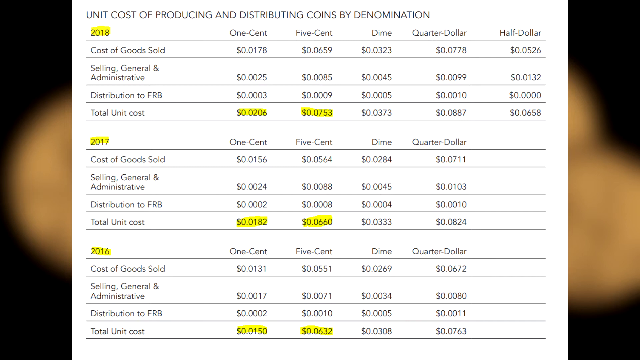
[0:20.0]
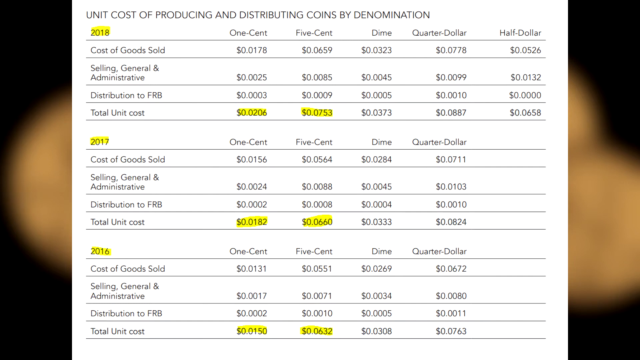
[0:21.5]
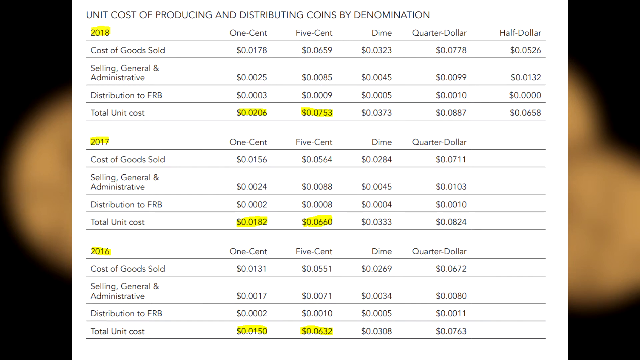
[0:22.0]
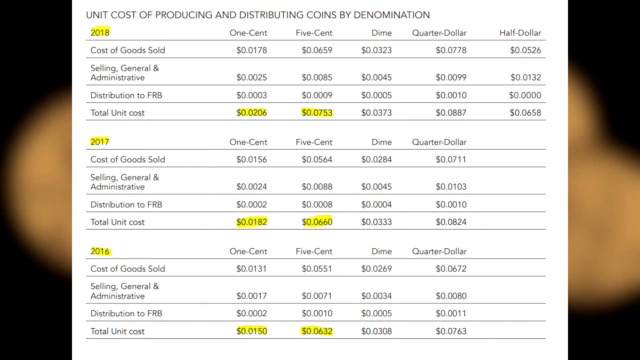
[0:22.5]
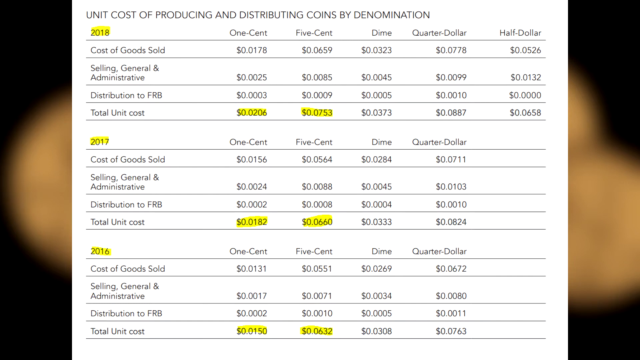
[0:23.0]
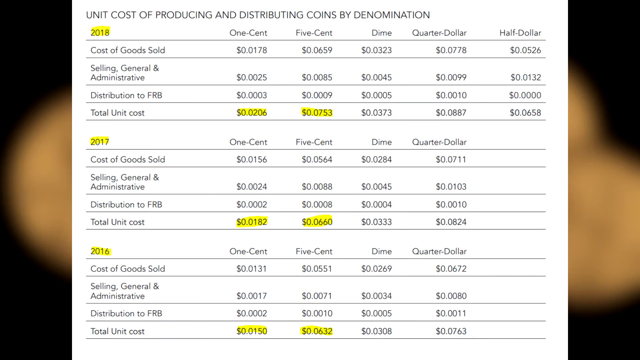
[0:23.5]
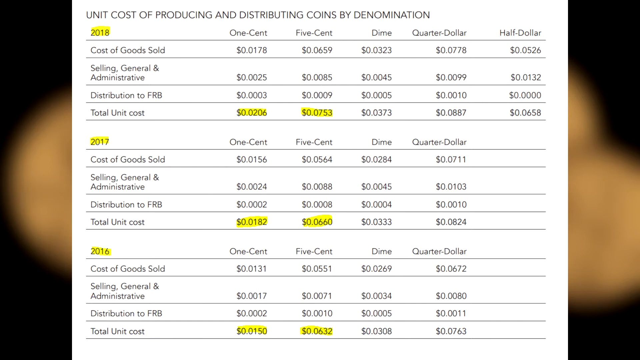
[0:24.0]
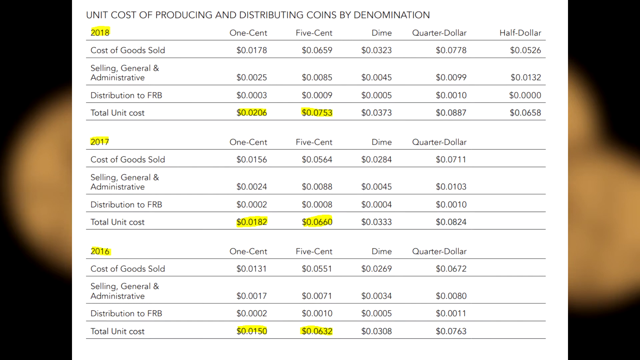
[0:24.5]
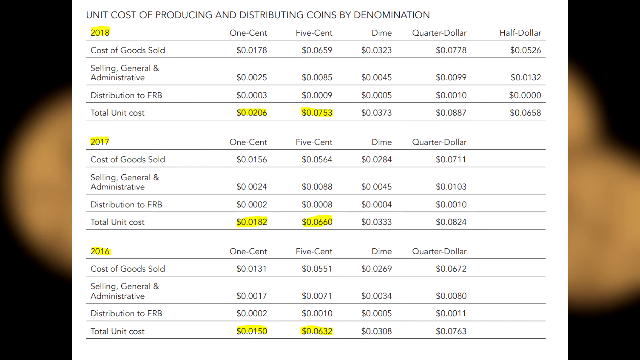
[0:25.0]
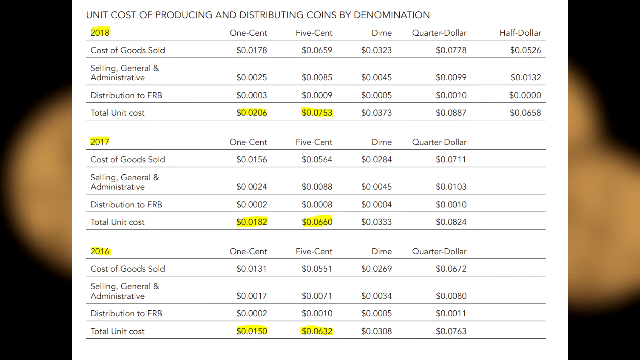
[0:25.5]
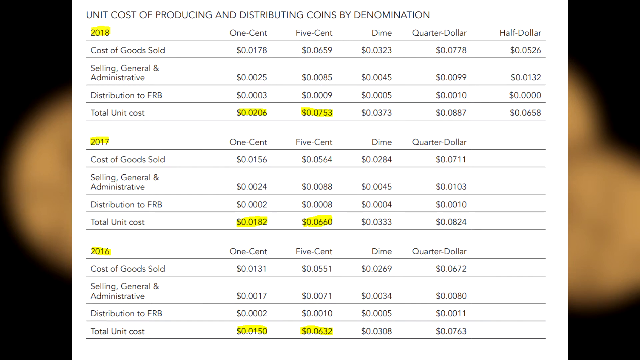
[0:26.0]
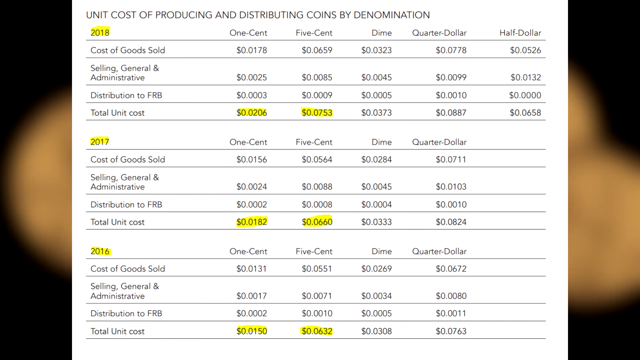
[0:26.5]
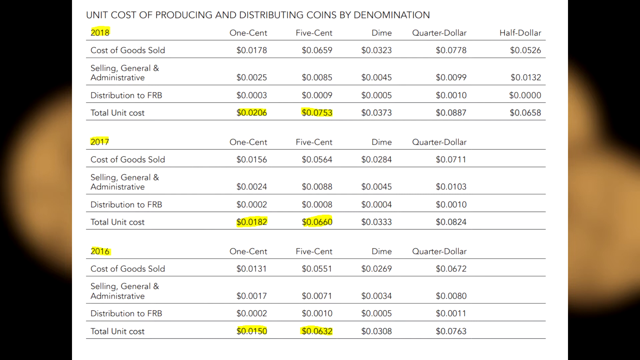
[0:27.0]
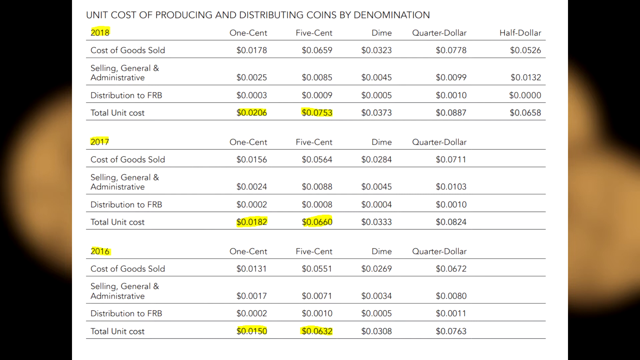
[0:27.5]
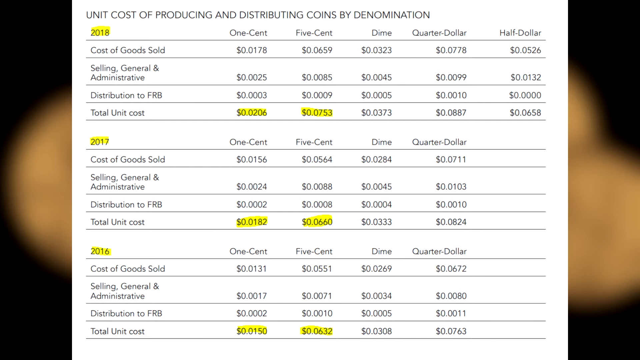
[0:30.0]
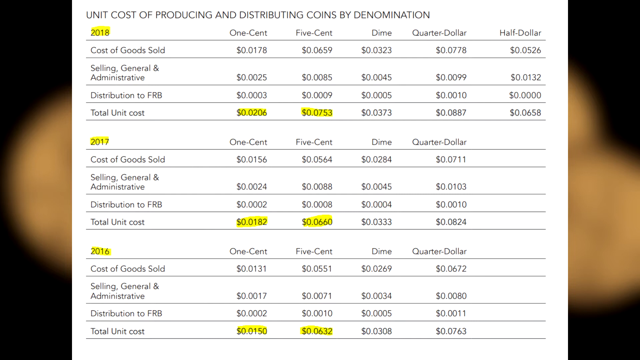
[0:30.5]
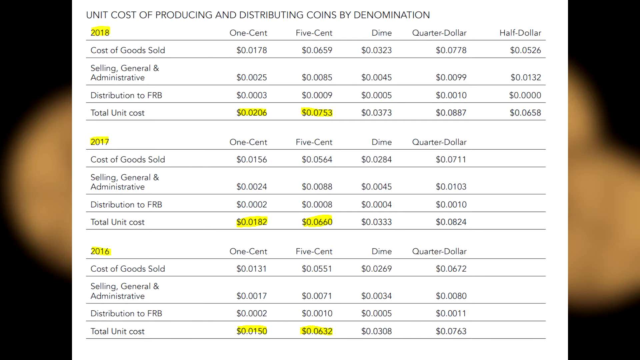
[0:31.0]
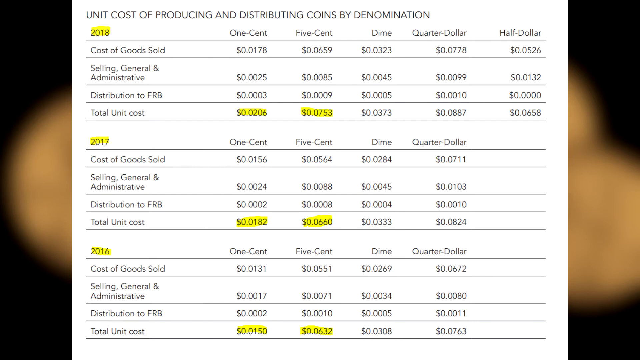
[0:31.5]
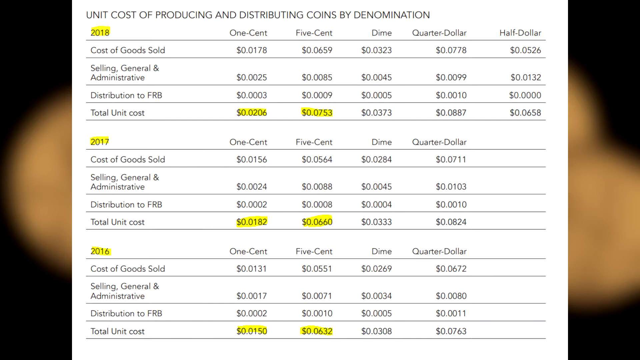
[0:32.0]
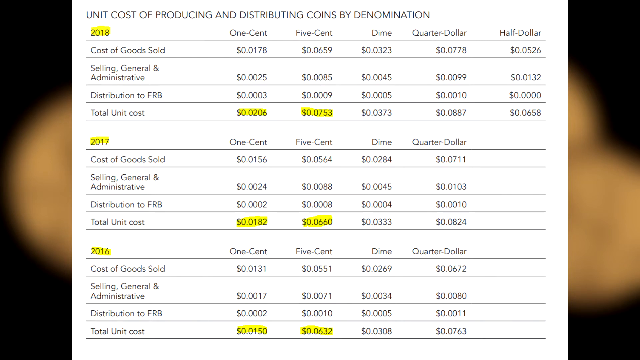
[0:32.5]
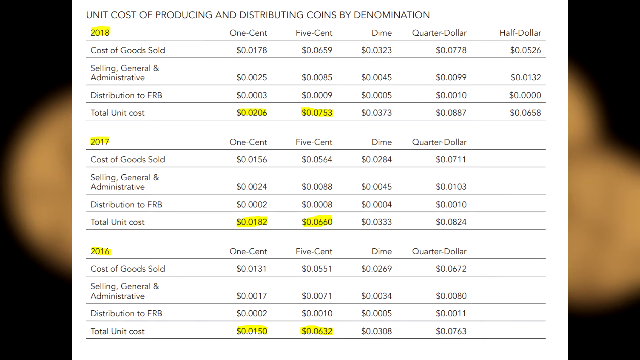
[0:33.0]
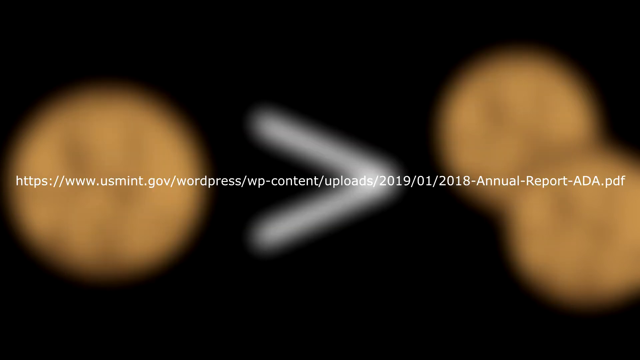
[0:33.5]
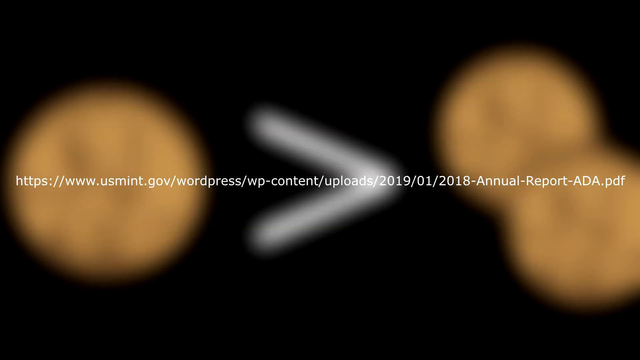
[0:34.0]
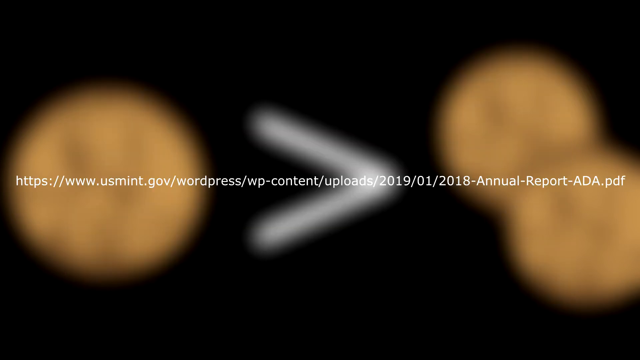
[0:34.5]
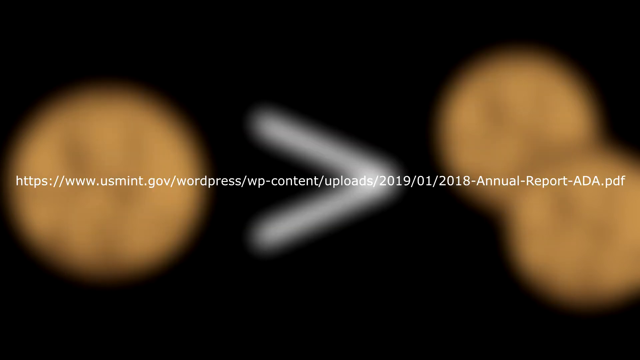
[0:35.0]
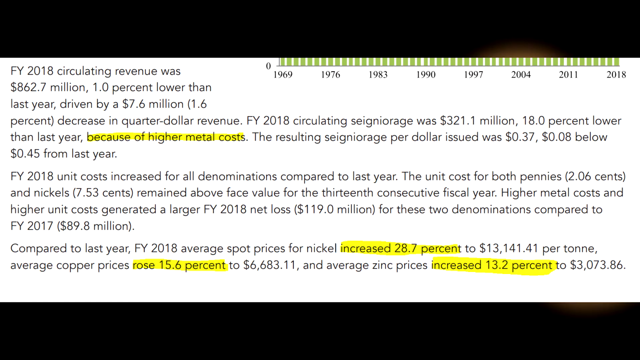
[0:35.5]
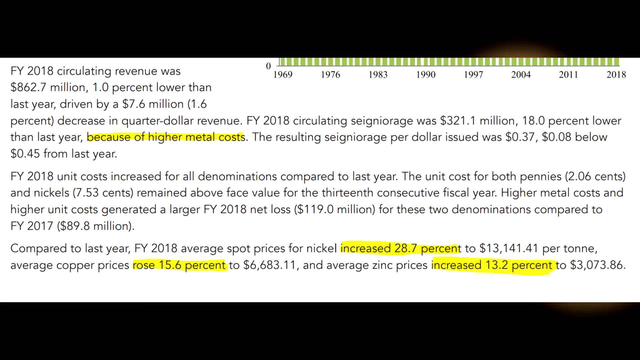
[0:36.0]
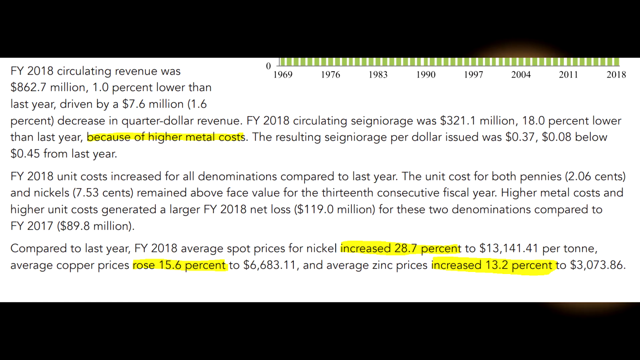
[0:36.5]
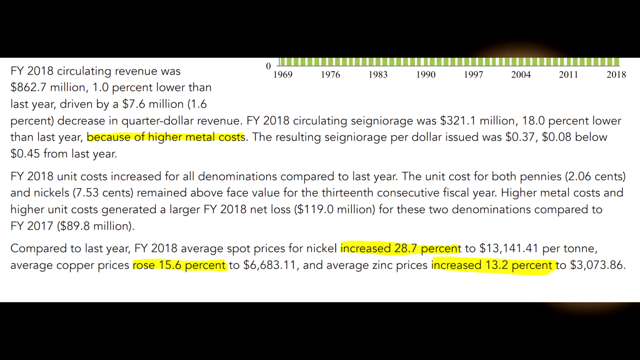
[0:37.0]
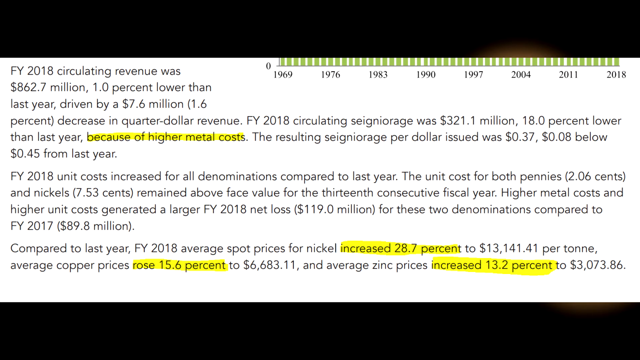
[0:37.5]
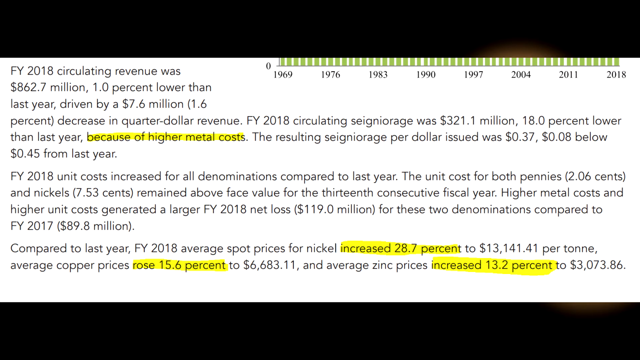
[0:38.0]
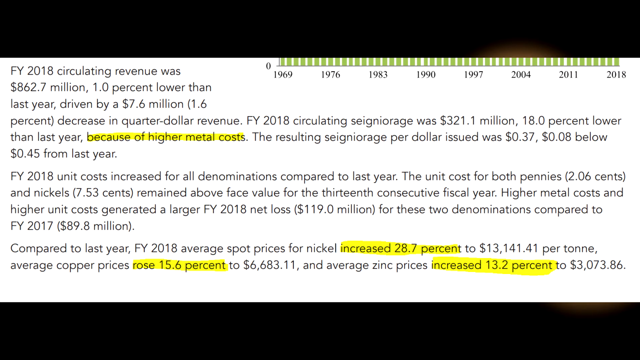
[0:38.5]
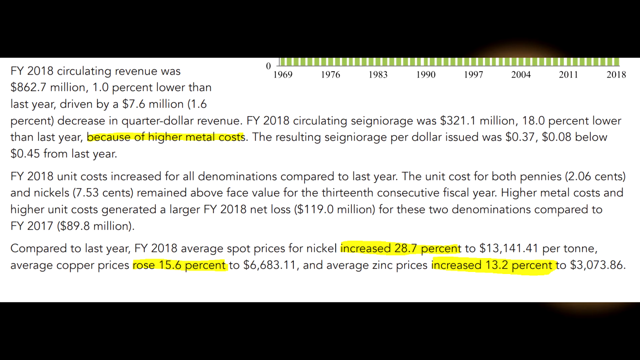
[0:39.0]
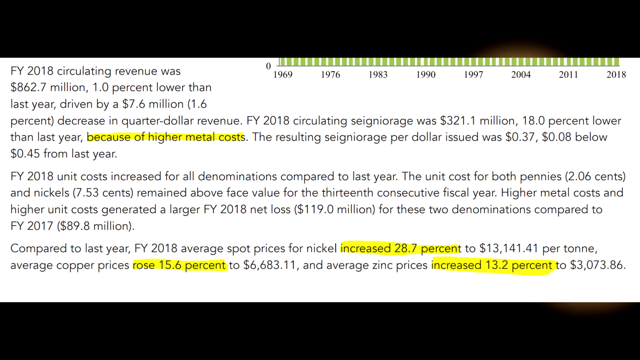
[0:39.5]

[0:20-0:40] The unit cost of producing and distributing coins by denomination is shown. In 2018 the cost to produce and distribute a 1 cent coin is 2 cents and a 5 cent coin 7.5 cents. In 2017 a 1 cent coin costs 2 cents and a 5 cent coin 6 cents. The page then shows the source, a link to the US Mint website. Further text states that in 2018 circulating revenue was $862.7 million, 1% lower than the previous year, driven by a decrease in quarter dollar revenue; that metal costs were higher in 2018; that the unit cost increased for all denominations compared to the previous year; that the unit cost for pennies and nickels remained above face value for the 13th consecutive fiscal year; and that higher metal costs and unit costs generated a large net loss for those denominations compared to 2017.